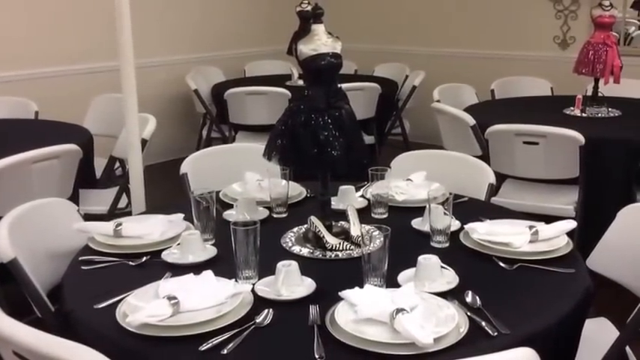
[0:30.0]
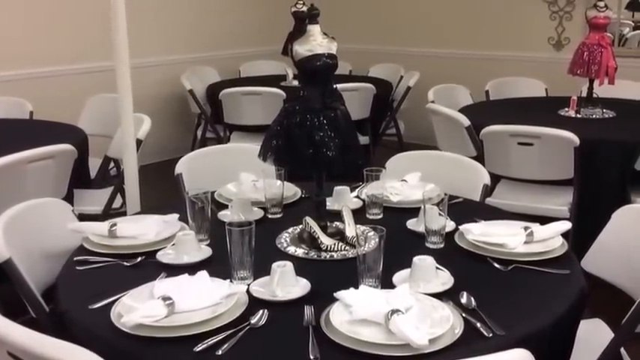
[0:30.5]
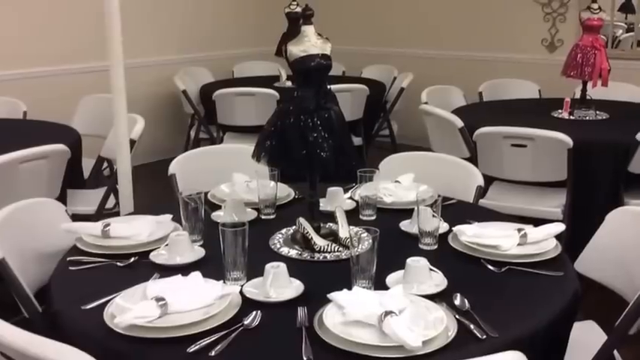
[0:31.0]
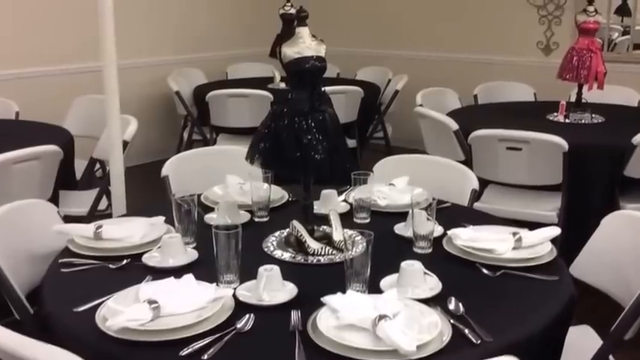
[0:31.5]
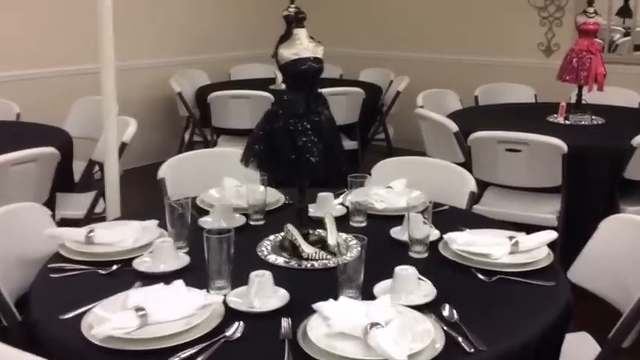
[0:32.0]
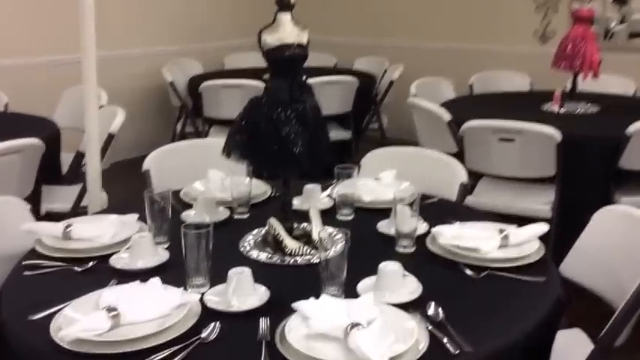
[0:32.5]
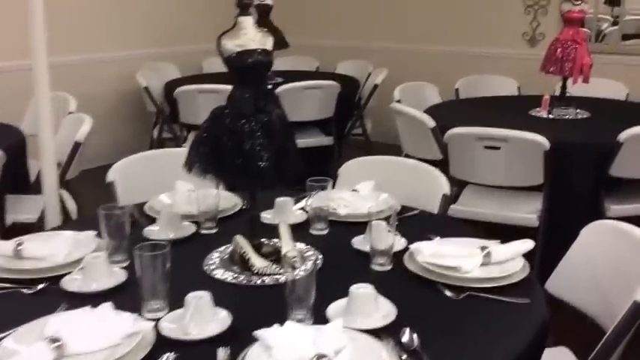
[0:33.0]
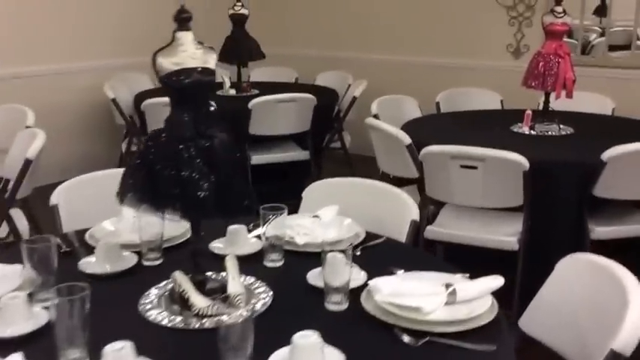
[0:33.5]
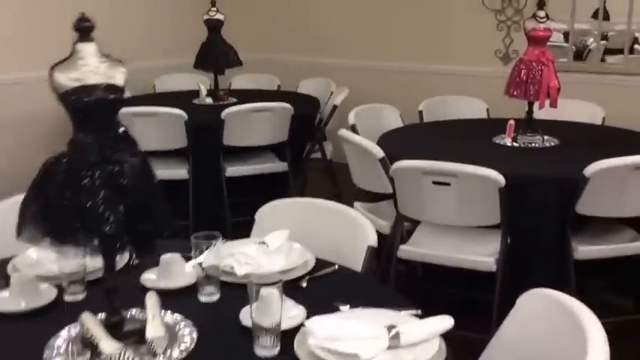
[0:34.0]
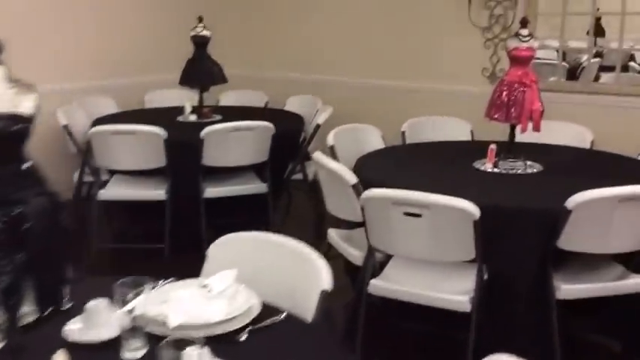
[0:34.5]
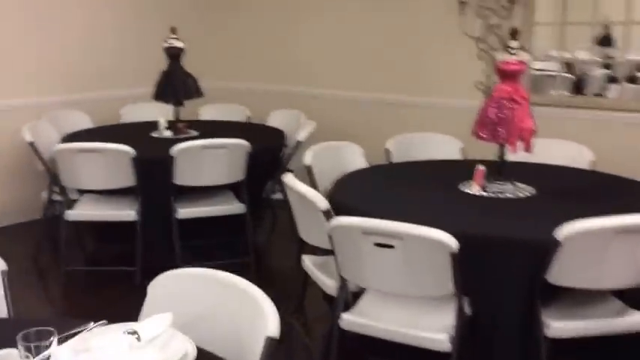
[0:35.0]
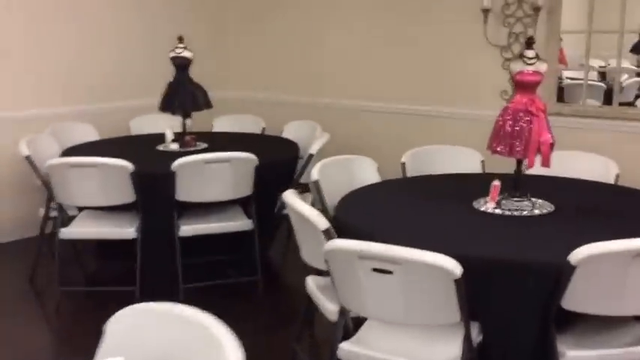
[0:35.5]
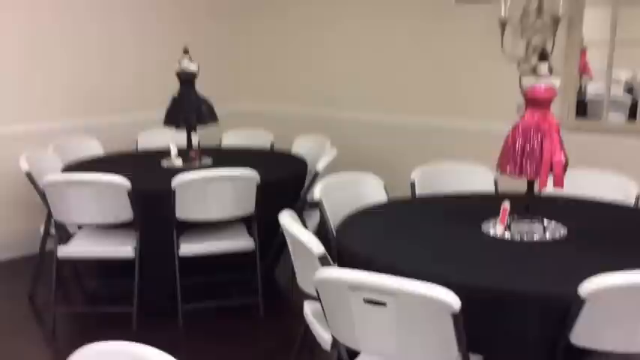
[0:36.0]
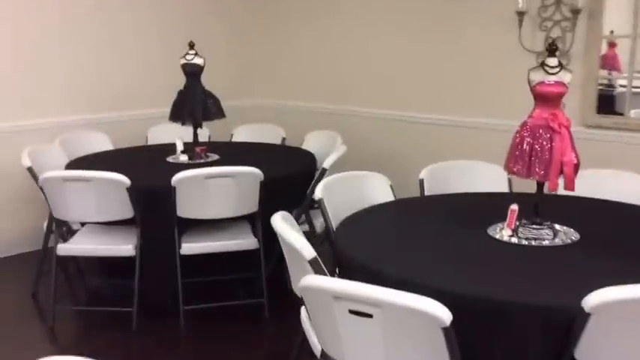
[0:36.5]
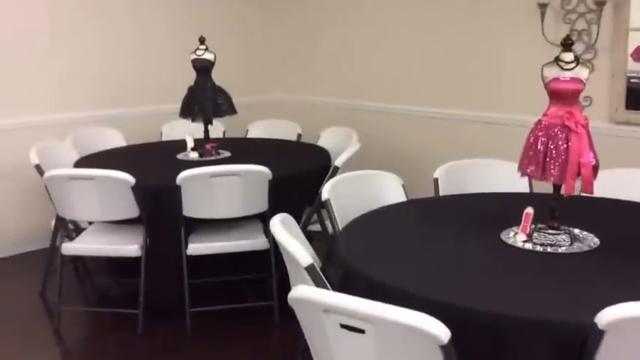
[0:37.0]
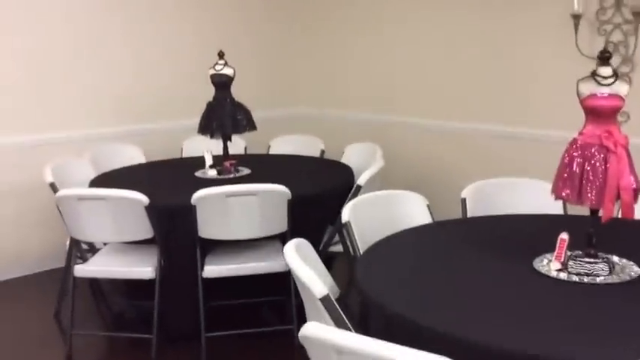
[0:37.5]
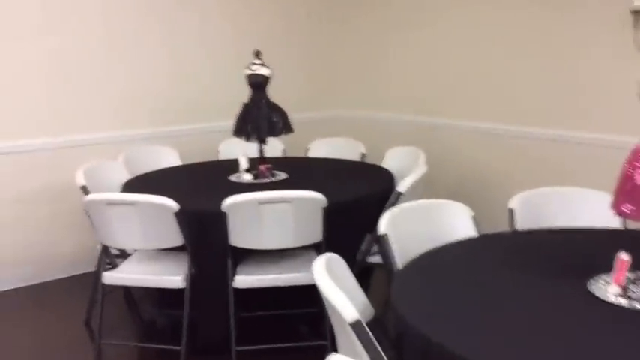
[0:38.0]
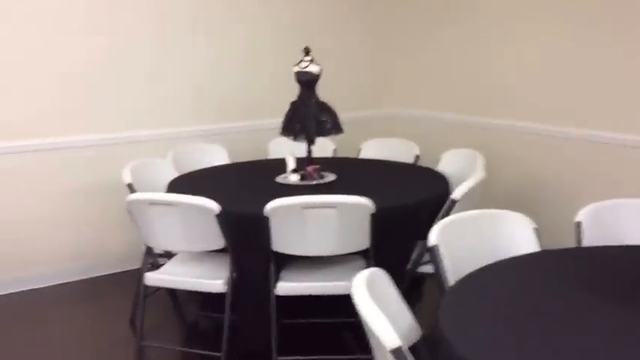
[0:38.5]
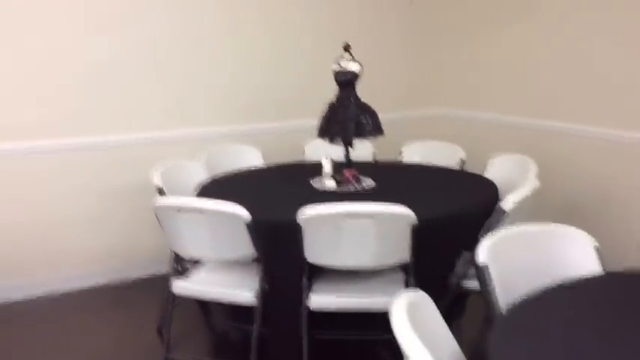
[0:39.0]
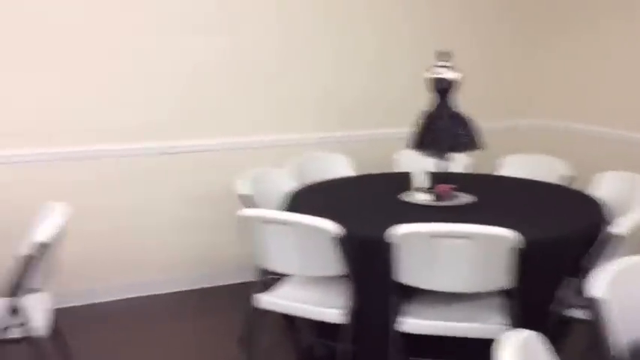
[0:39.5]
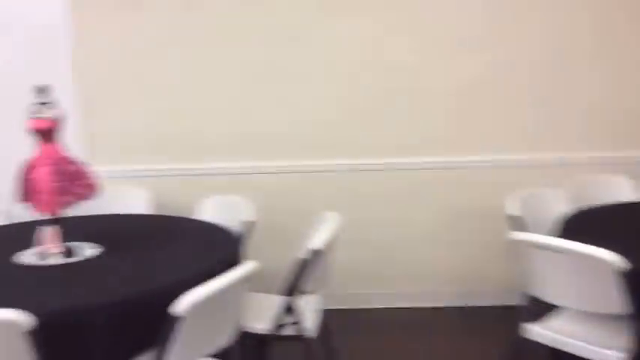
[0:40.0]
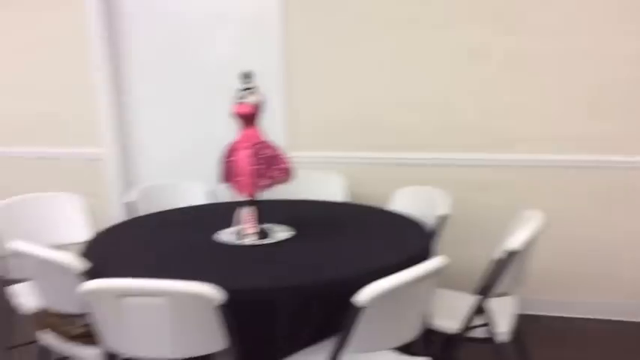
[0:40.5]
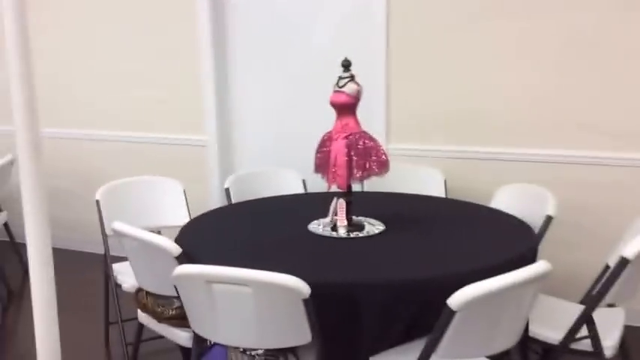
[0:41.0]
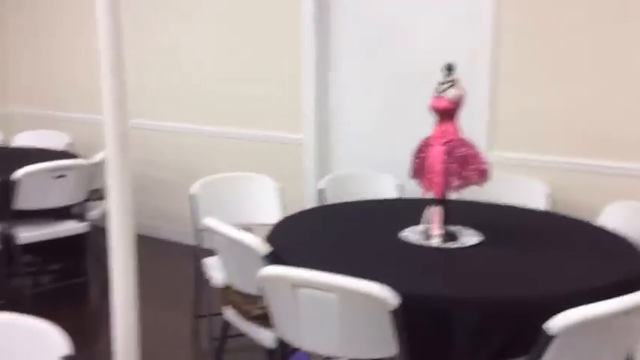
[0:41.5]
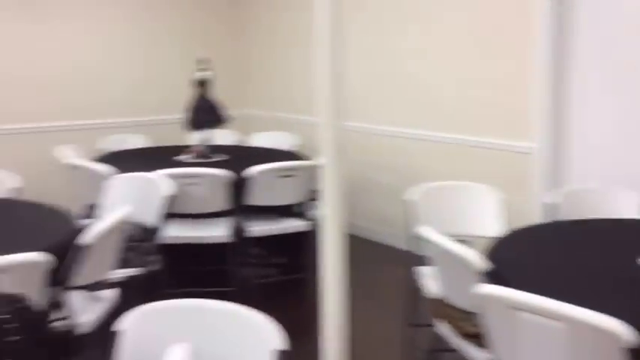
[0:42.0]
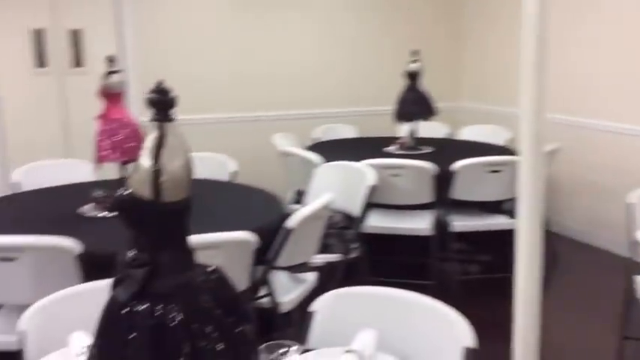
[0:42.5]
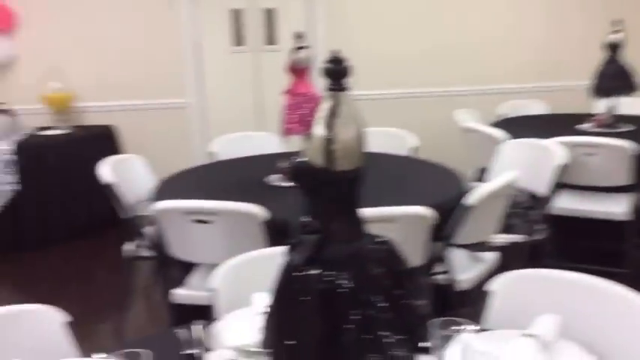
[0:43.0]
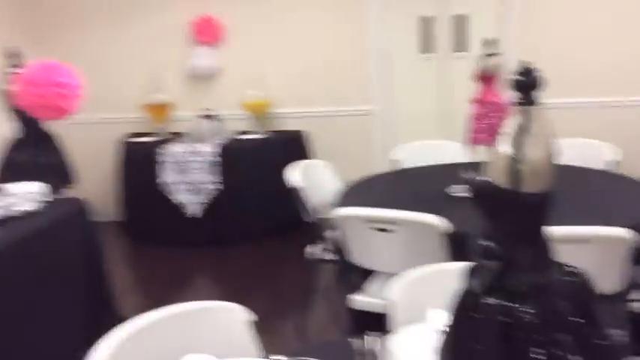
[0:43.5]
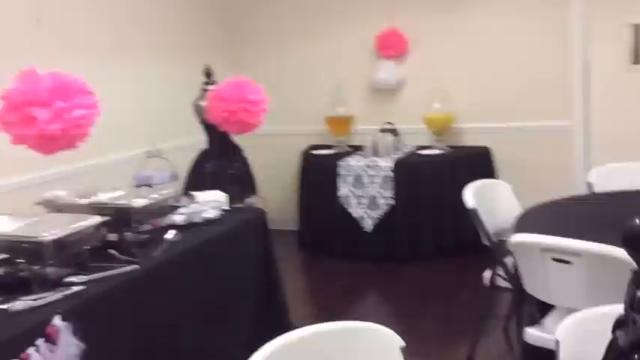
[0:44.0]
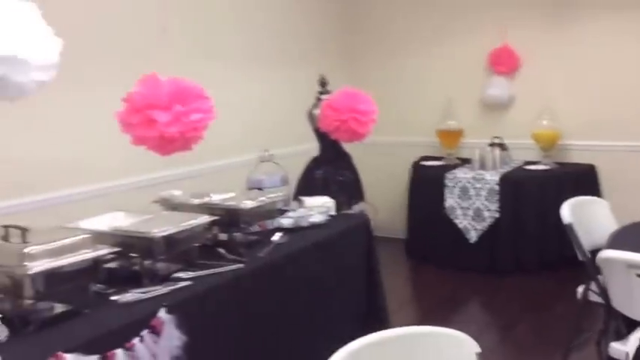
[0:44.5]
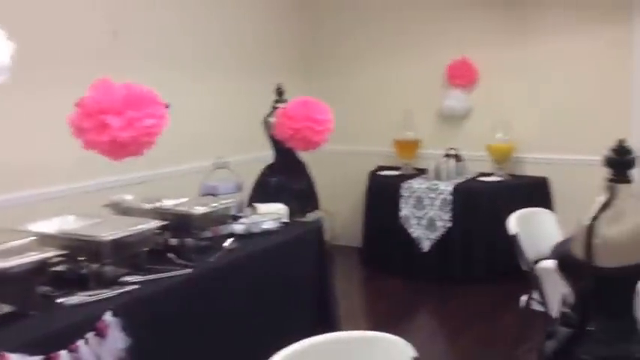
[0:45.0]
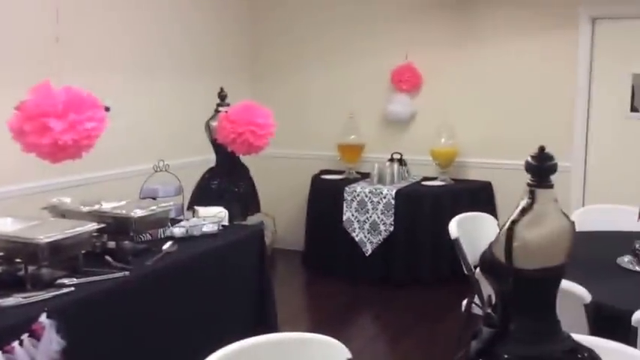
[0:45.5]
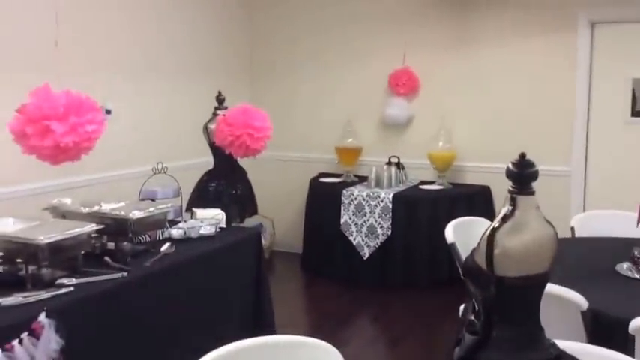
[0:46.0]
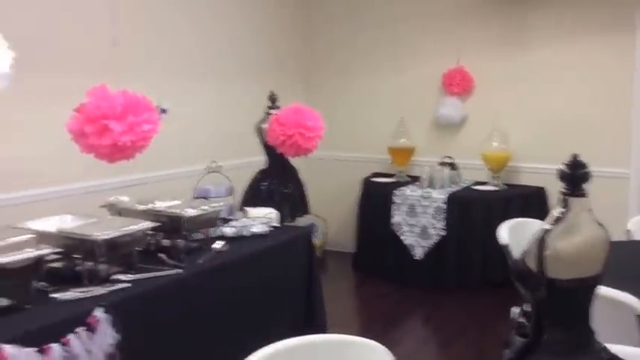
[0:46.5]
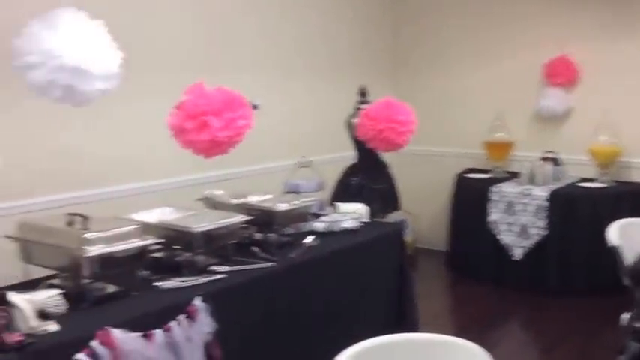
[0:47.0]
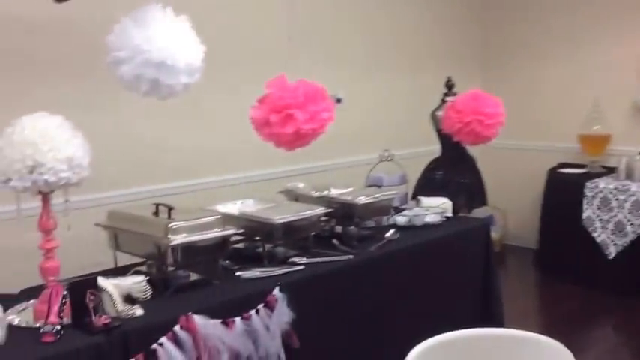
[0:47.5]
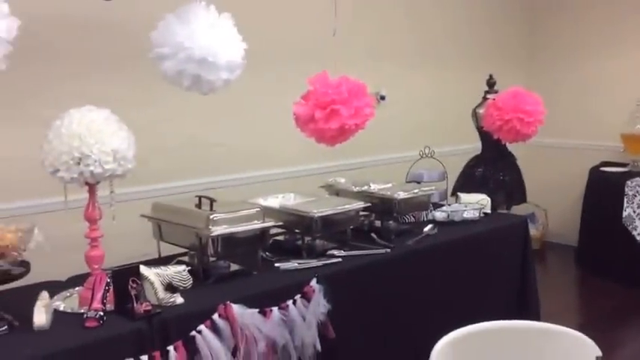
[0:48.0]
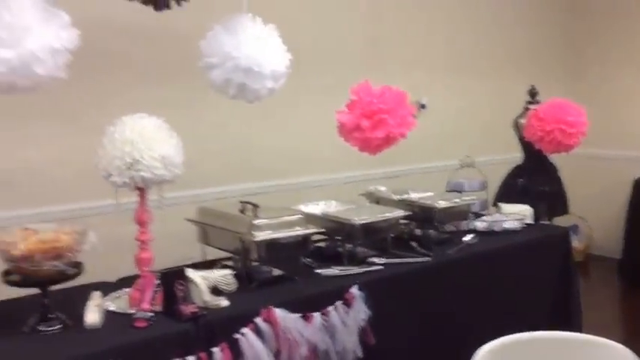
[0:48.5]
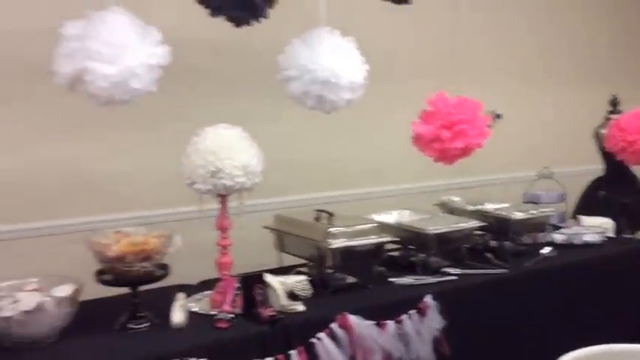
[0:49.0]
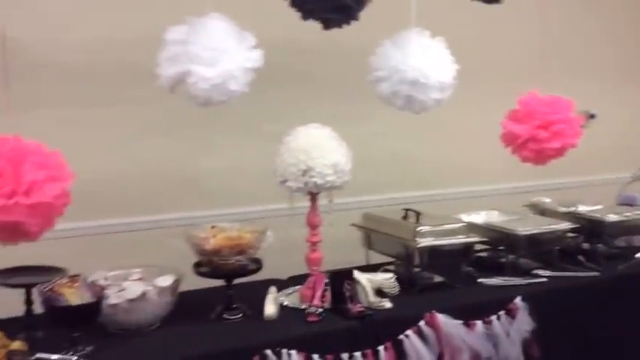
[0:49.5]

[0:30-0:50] After walking up to the pink table at the right end, the camera continues moving around the room, sort of focusing in on the black table in the corner before panning to the left. It pans to the pink dress at the back of the room, then to the other corner at the left end, which has another black dress on the table. Panning further, the left end of the room has a double set of doors with vertical rectangular windows. To the left of the doors is a rectangular black table with a white sort of cloth in the center bearing little black decorations. On its left and right are big circular jugs holding orange on the left and yellow liquids or some sort of coloring. In the middle is cookware potentially holding some food. Big pink and white pom-poms, sort of like foam balls, are on the wall.